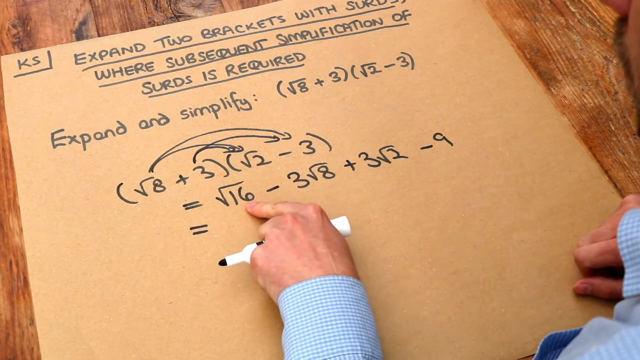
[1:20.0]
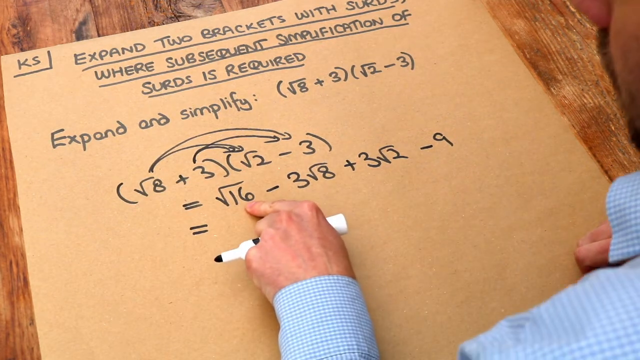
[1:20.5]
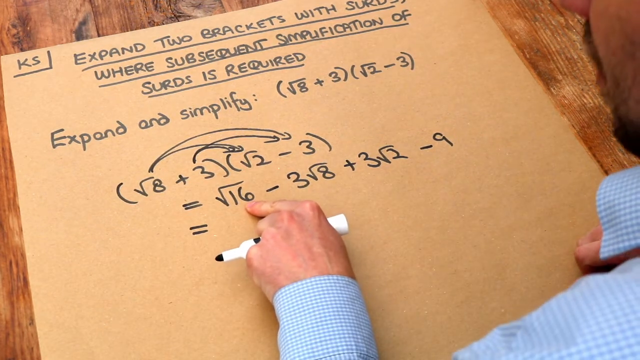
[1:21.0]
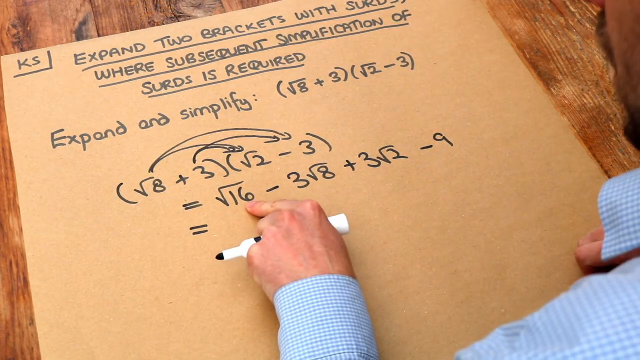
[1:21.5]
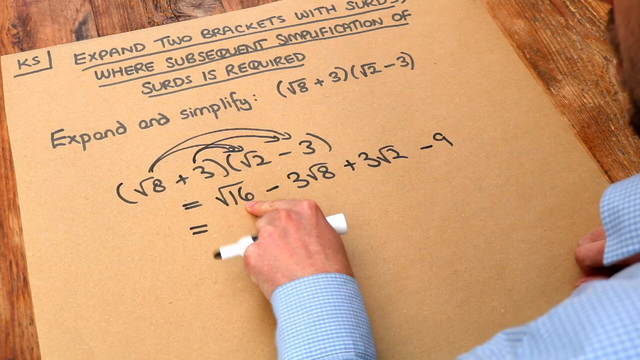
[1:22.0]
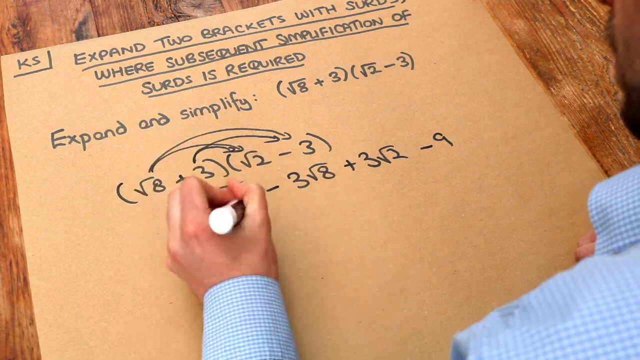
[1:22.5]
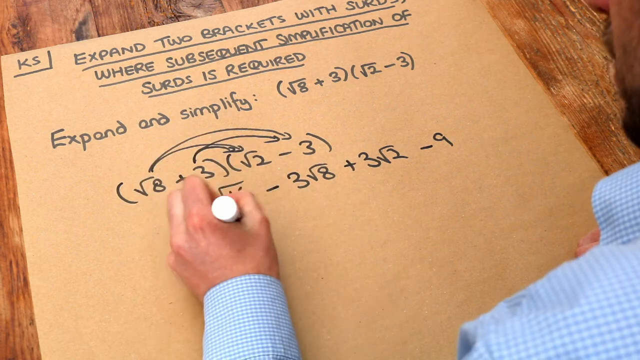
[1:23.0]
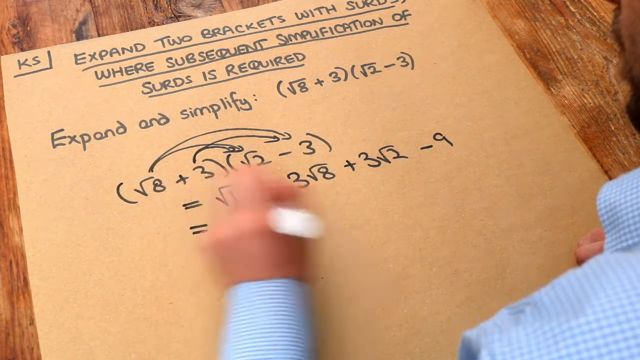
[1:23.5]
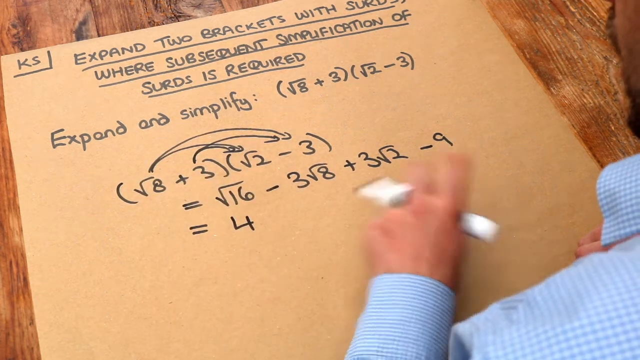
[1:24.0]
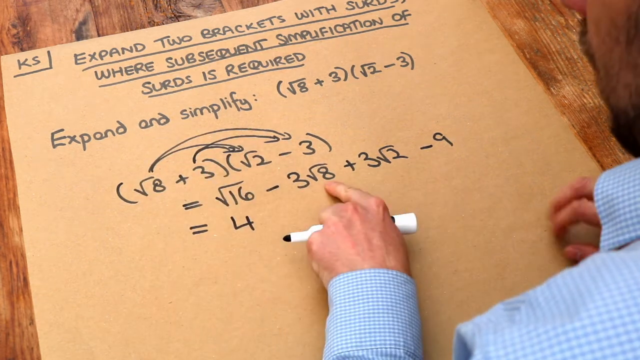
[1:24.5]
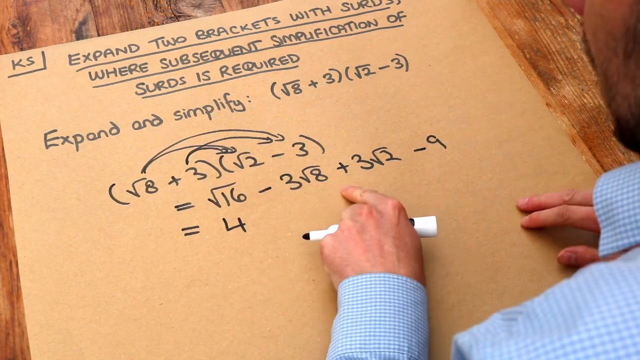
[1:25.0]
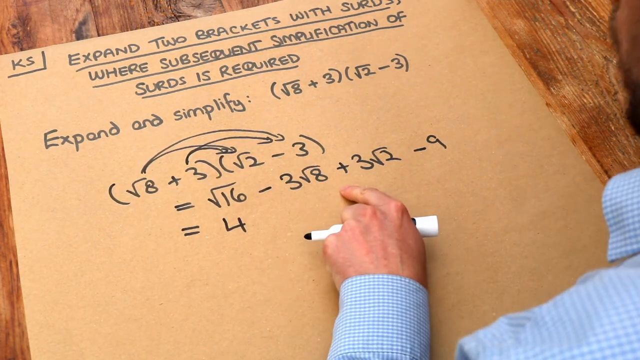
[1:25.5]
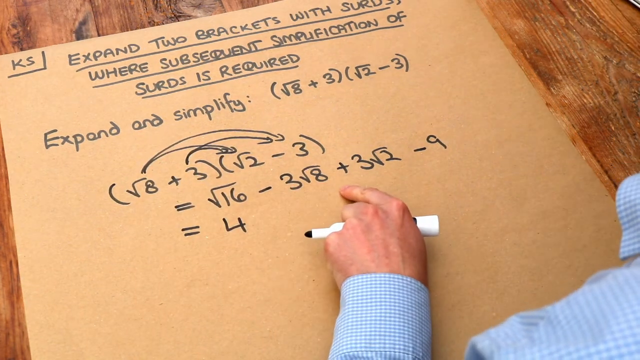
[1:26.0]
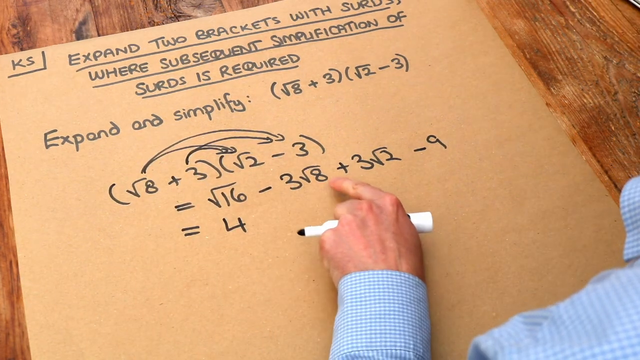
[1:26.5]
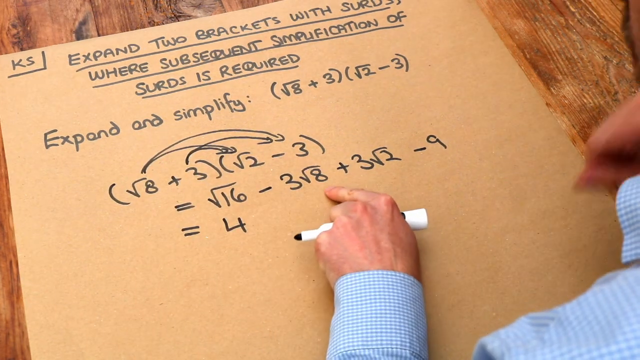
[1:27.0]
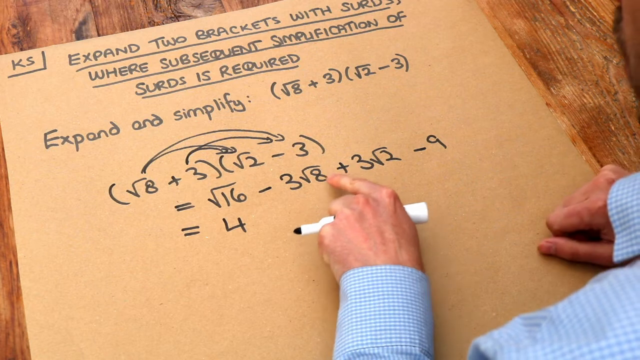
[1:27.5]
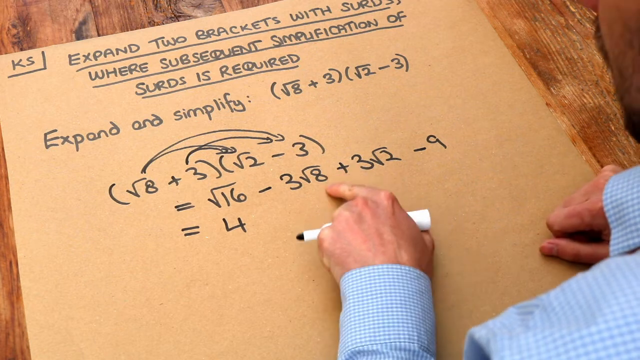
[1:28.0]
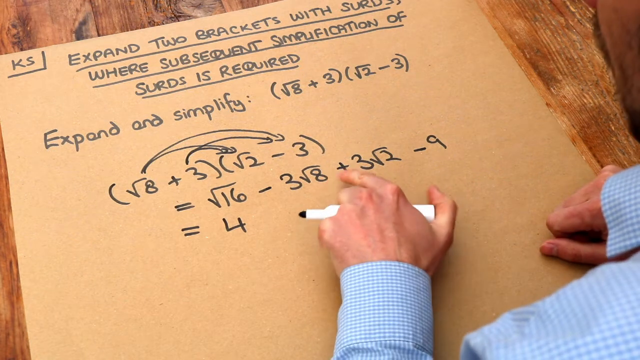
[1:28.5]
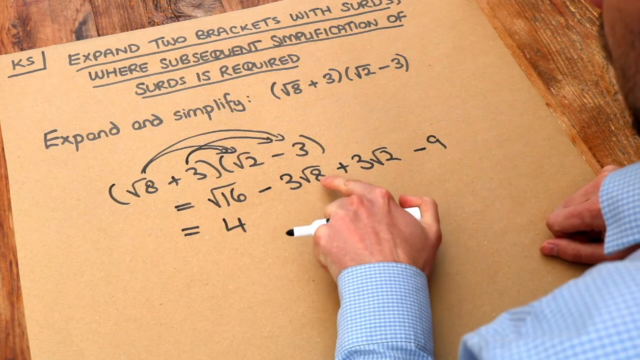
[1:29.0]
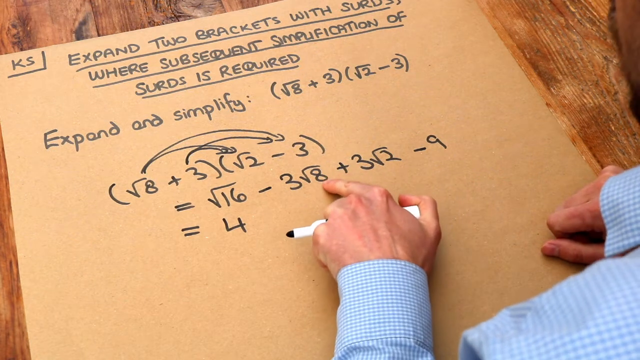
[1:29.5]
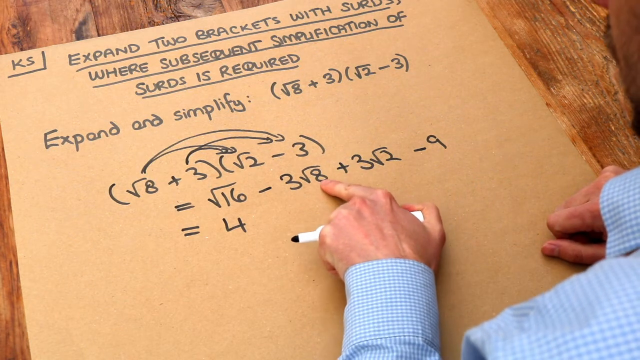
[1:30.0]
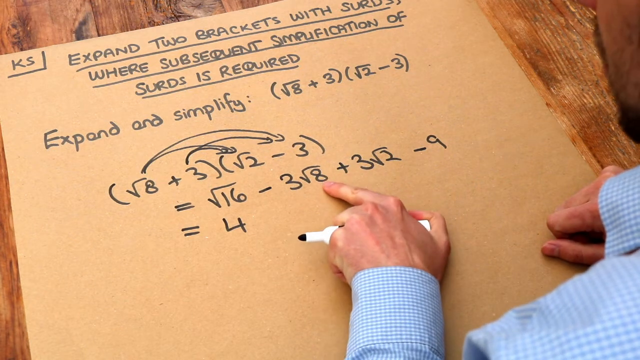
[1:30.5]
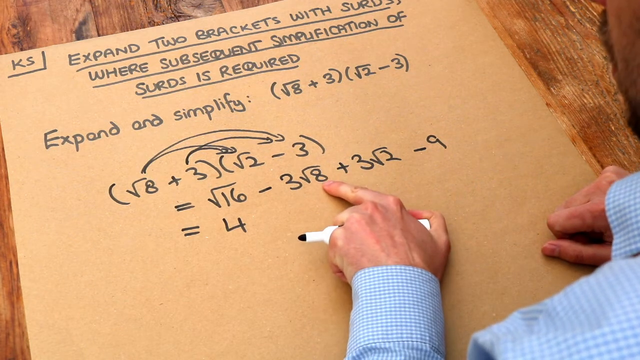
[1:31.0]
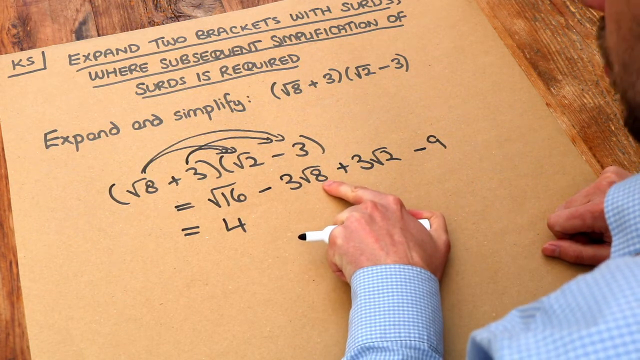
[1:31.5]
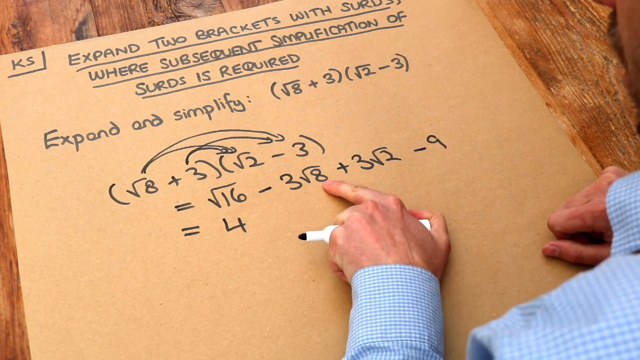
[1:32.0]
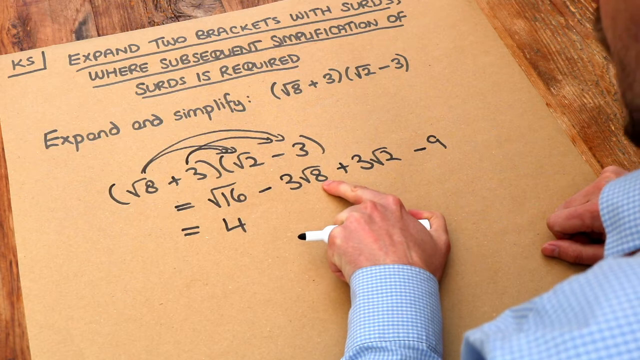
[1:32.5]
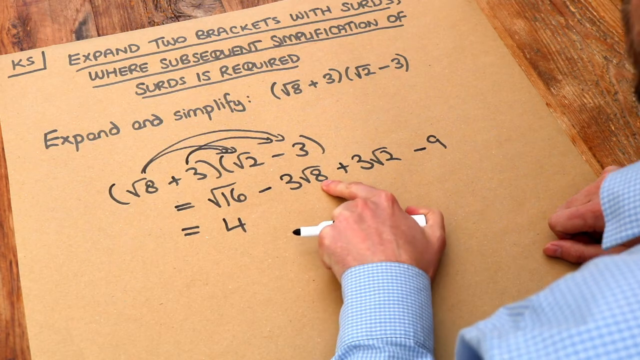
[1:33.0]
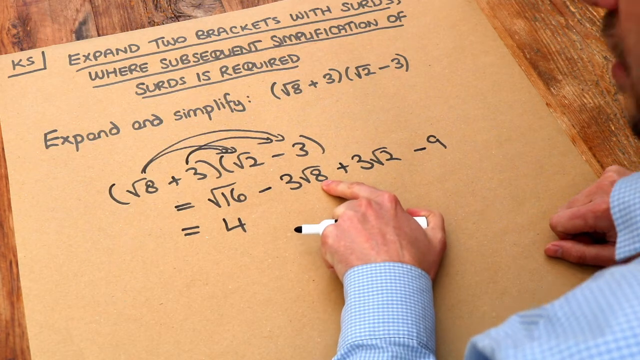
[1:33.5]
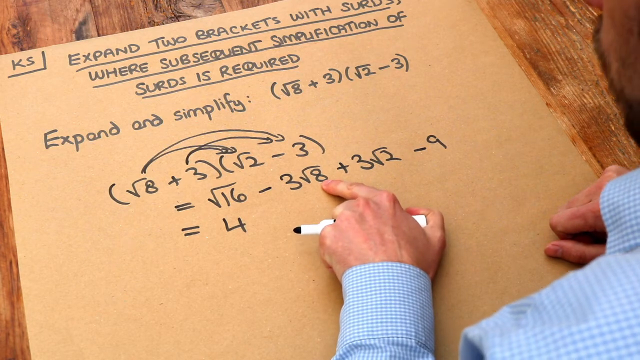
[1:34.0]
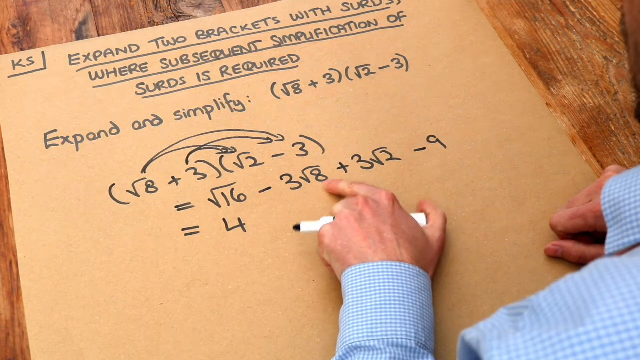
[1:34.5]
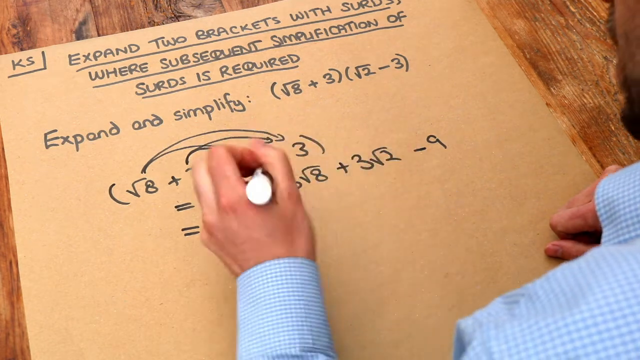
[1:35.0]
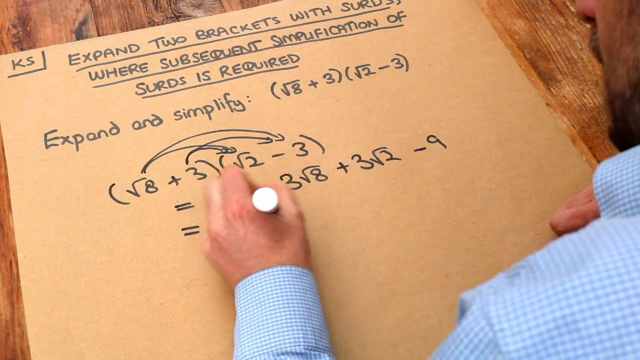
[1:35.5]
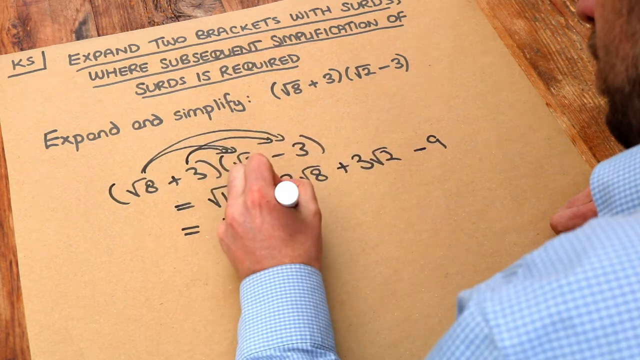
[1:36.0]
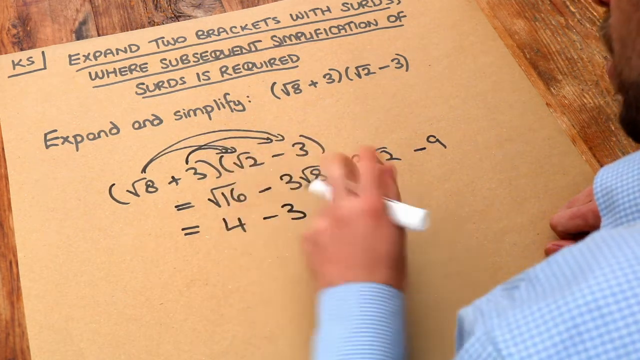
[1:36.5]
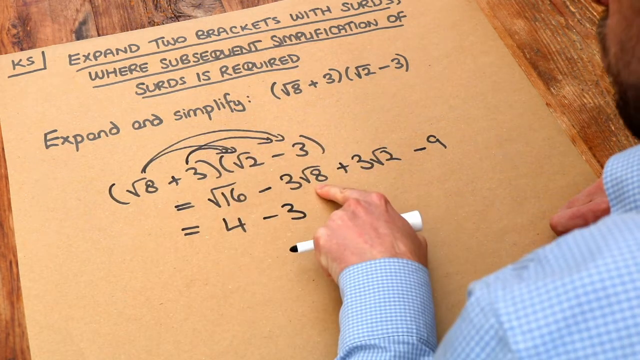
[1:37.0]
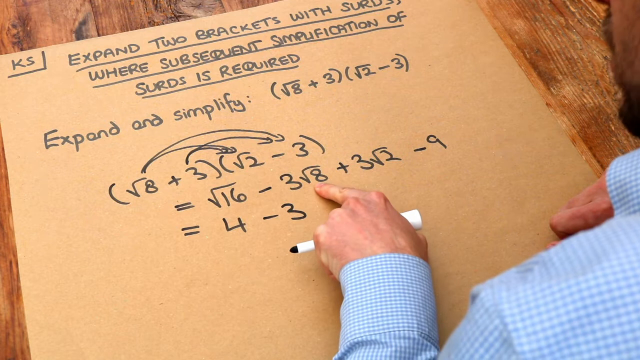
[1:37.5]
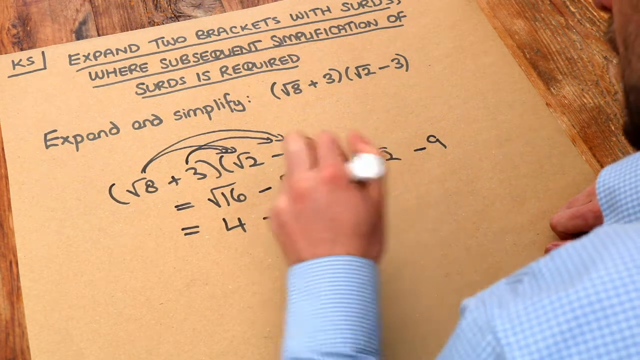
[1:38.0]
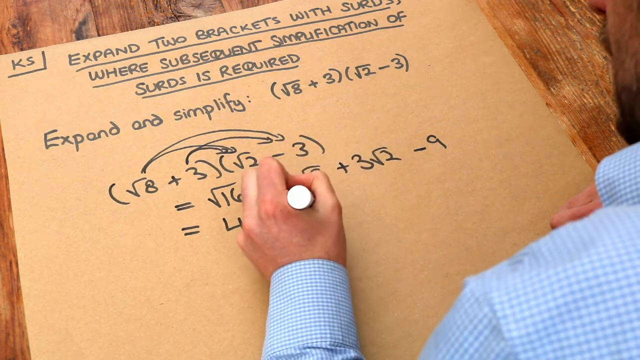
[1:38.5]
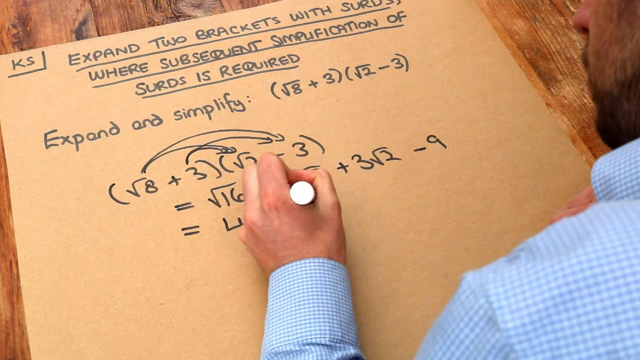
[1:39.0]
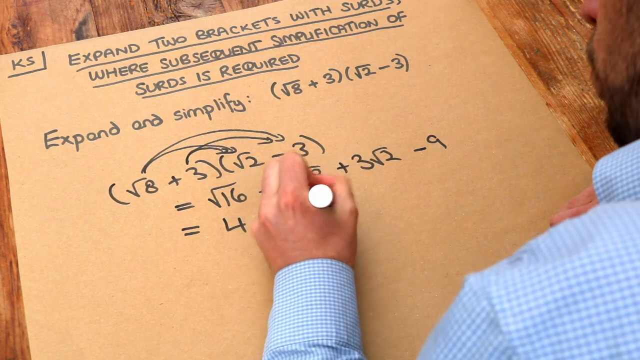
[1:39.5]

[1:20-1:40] He points at the square root of 16 with his left pointer finger; a little of the side of his jaw is visible, moving as he talks. Underneath the square root of 16 he writes equals four, then taps three square root of eight with his finger. His thumb moves around to the end of the marker while his finger points right under the eight in the square root of eight. His right hand is down, barely visible on the side. He turns a little closer to the camera, showing his bottom lip and mustache, then looks back forward and down. He brings the marker back to the row with the four and writes minus three, points at the square root of eight again with his left hand, and starts writing beside the three.